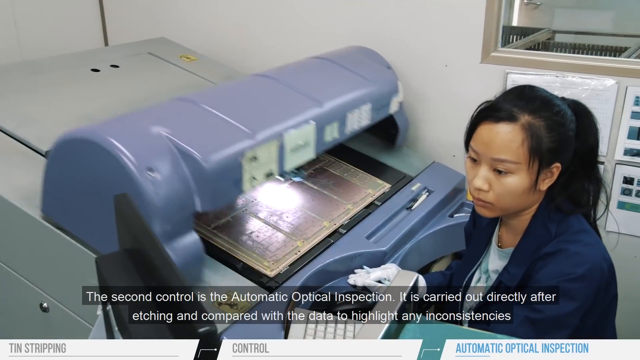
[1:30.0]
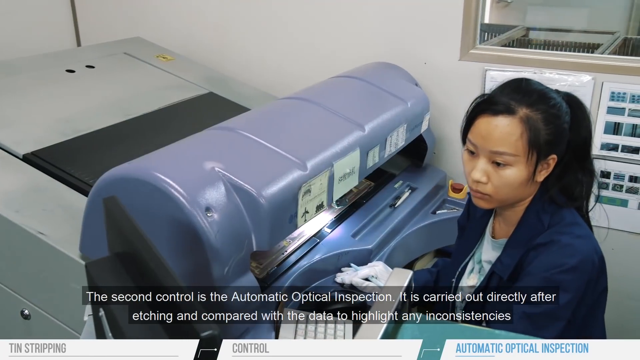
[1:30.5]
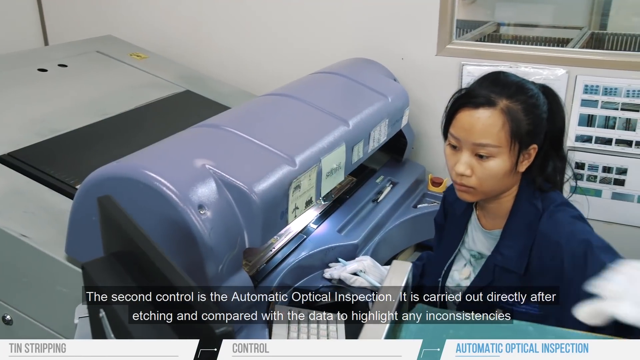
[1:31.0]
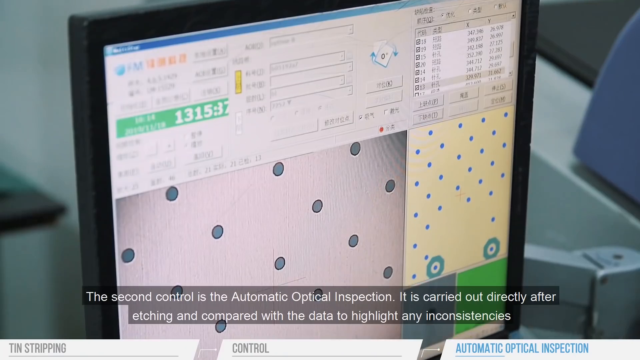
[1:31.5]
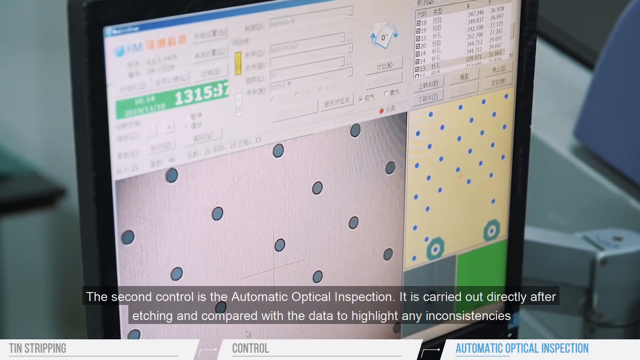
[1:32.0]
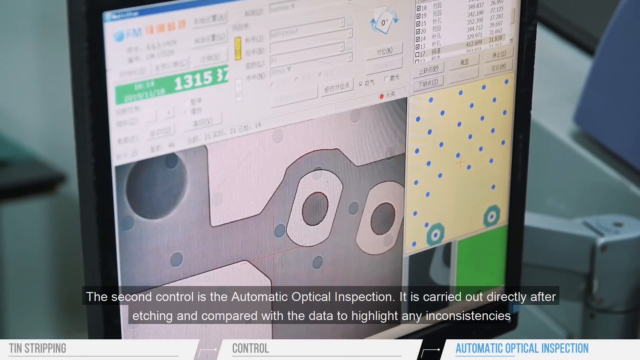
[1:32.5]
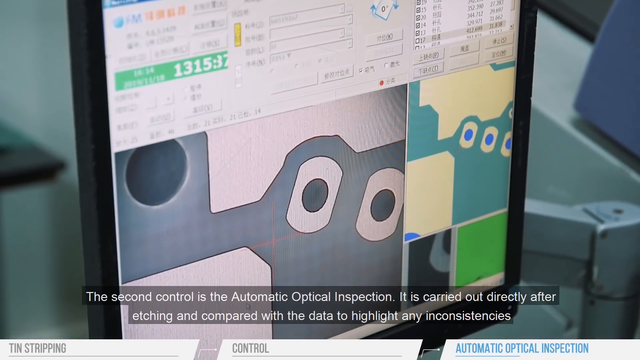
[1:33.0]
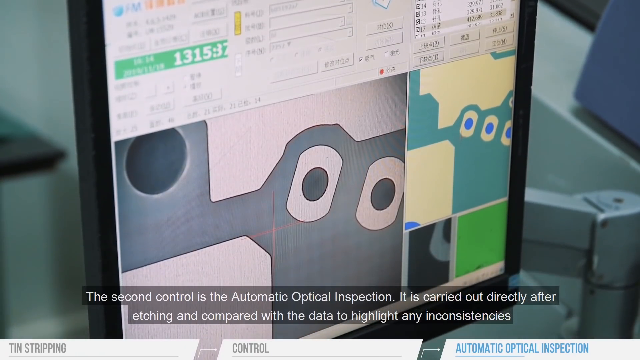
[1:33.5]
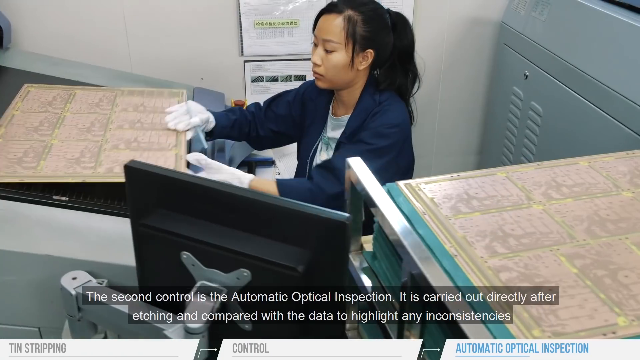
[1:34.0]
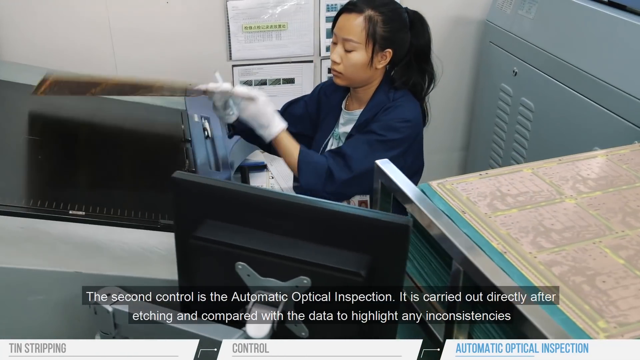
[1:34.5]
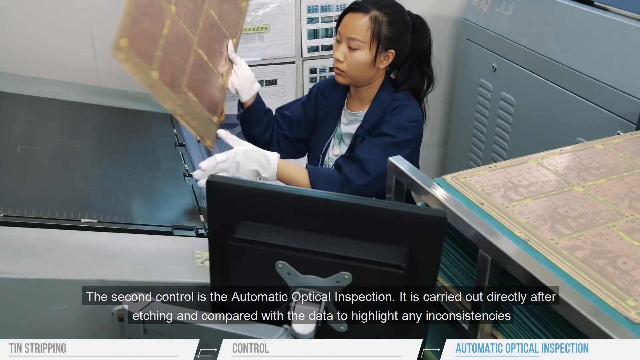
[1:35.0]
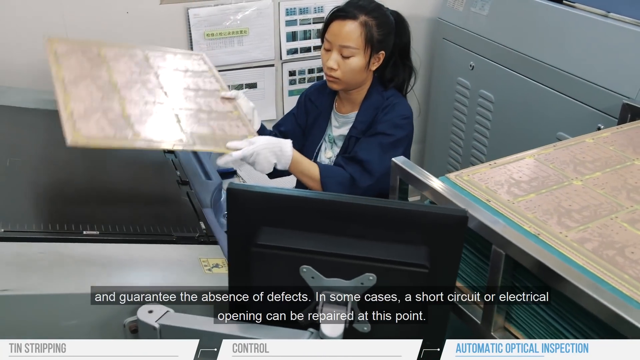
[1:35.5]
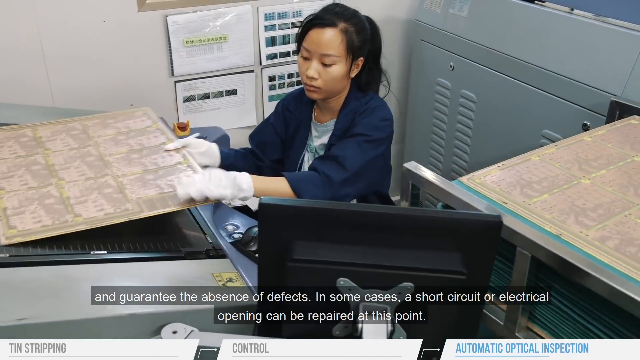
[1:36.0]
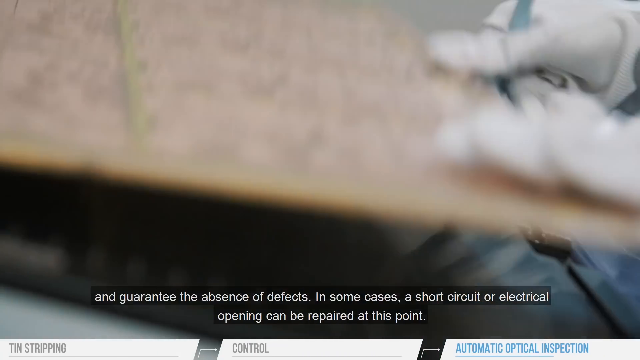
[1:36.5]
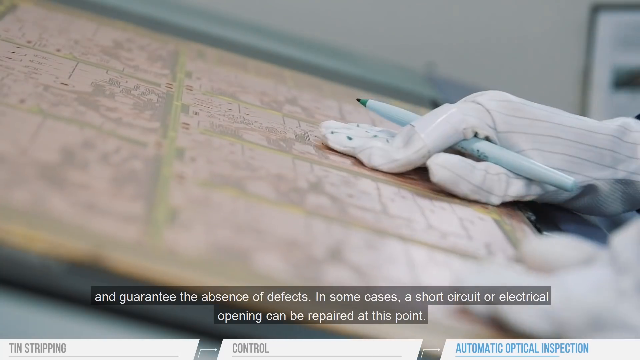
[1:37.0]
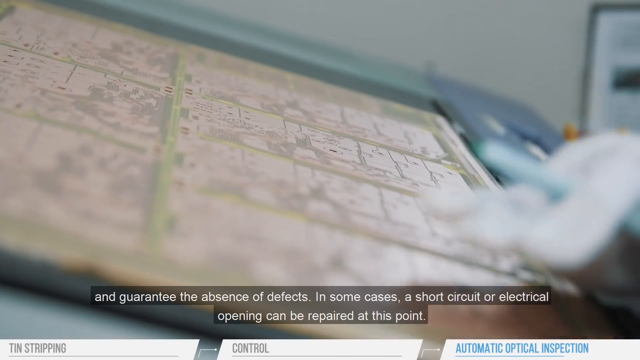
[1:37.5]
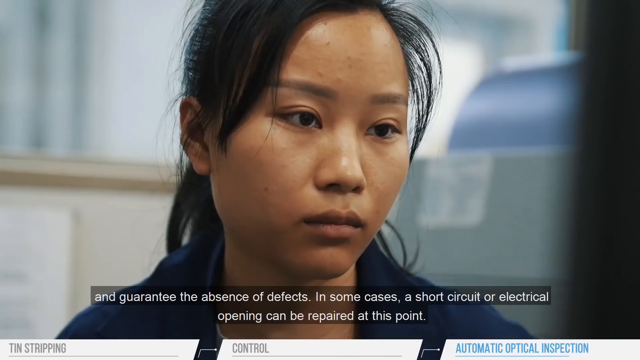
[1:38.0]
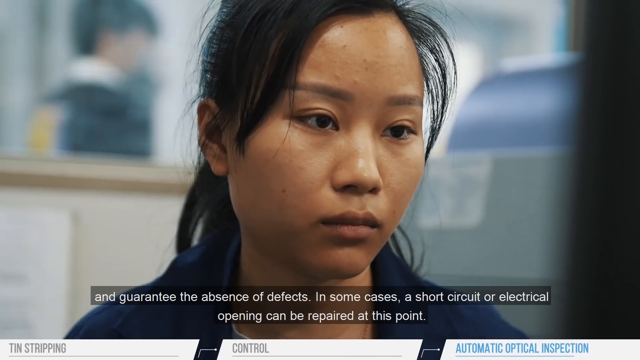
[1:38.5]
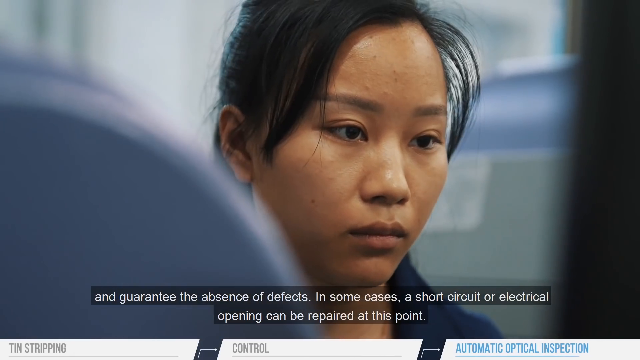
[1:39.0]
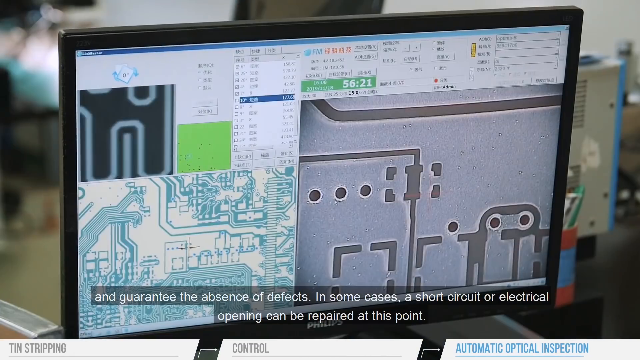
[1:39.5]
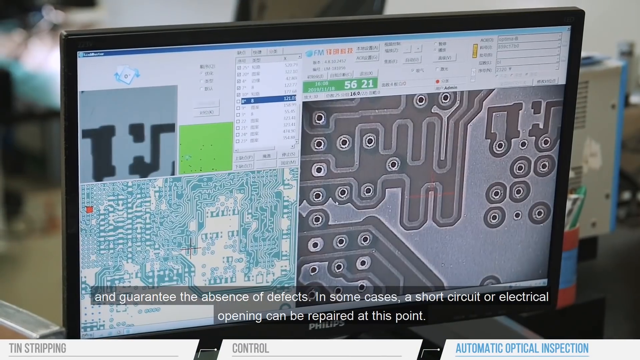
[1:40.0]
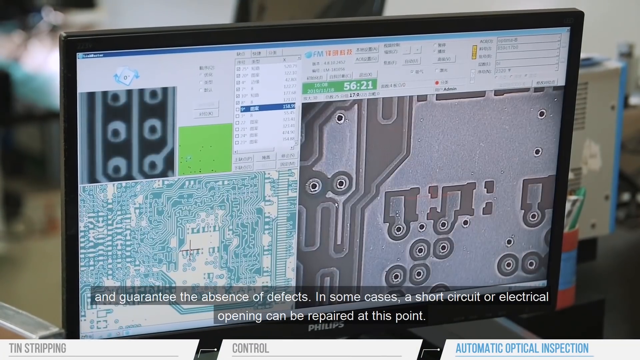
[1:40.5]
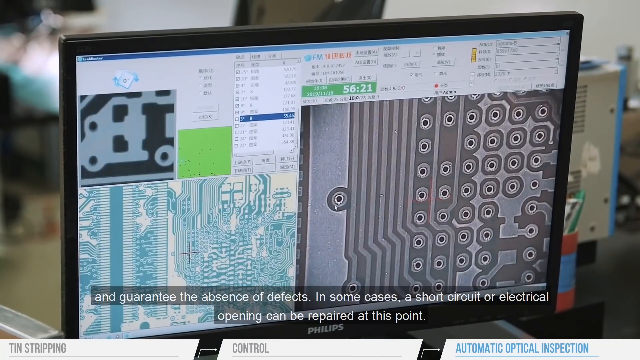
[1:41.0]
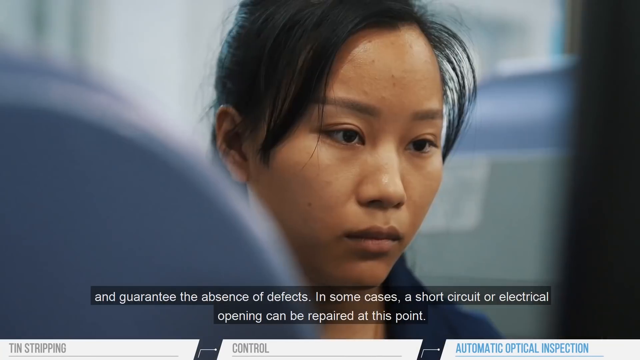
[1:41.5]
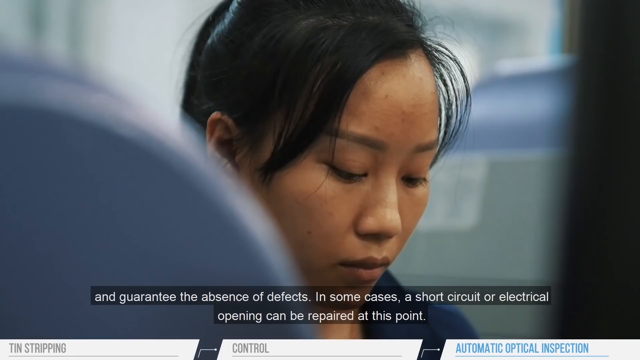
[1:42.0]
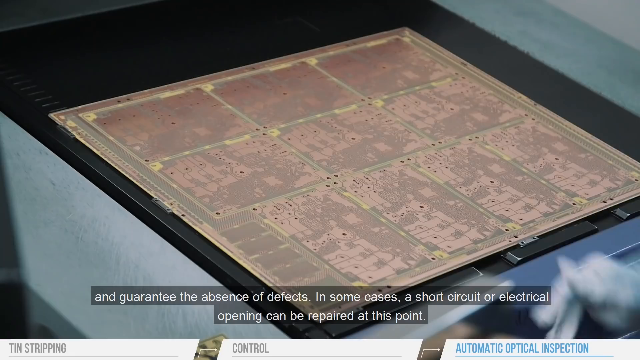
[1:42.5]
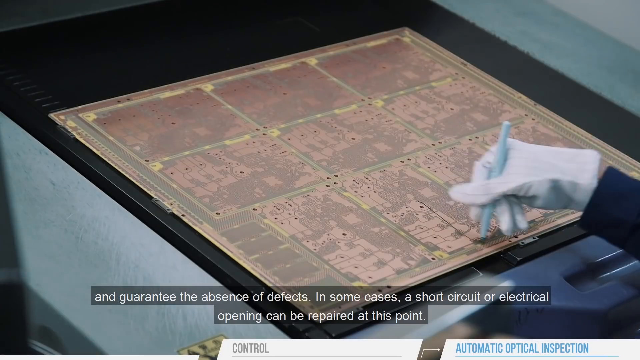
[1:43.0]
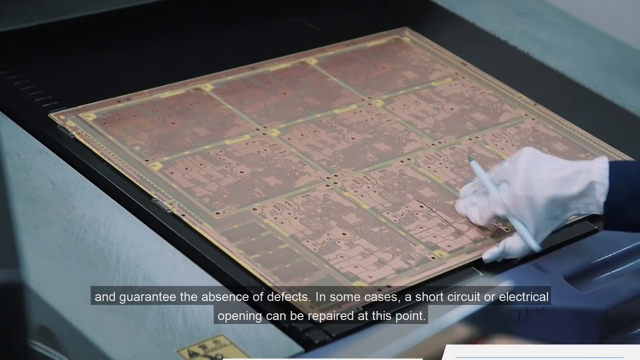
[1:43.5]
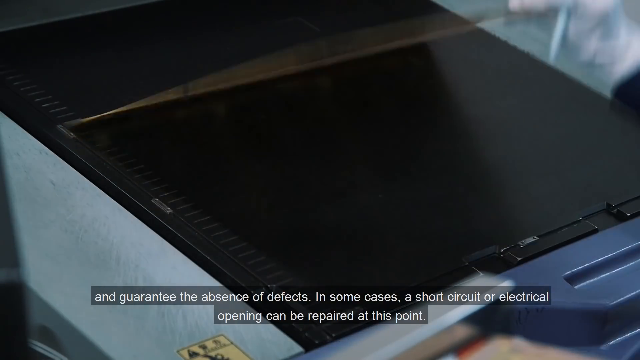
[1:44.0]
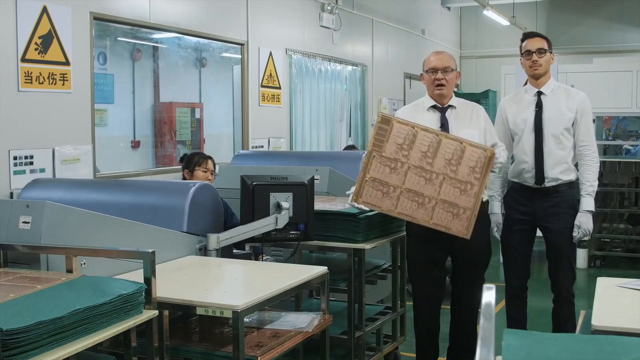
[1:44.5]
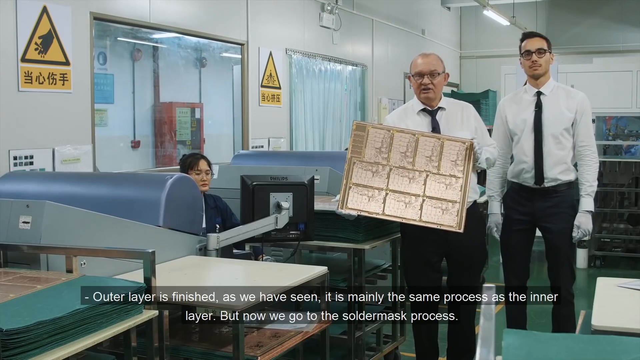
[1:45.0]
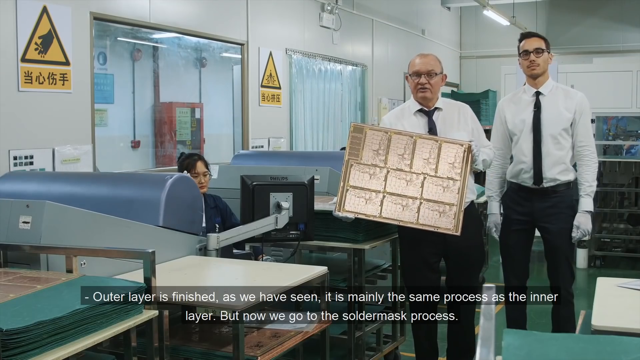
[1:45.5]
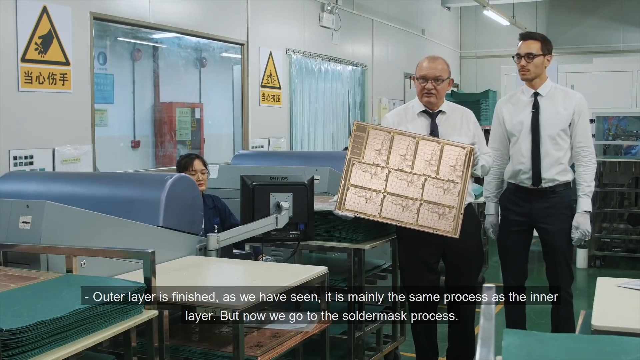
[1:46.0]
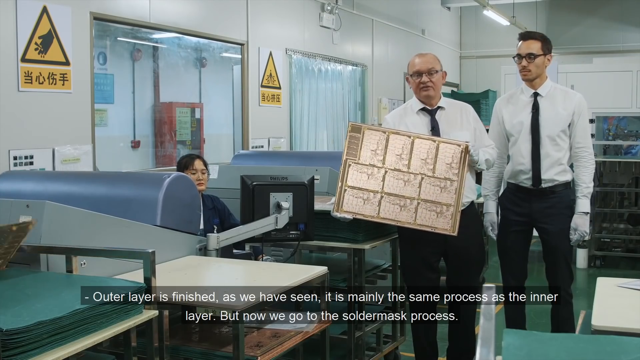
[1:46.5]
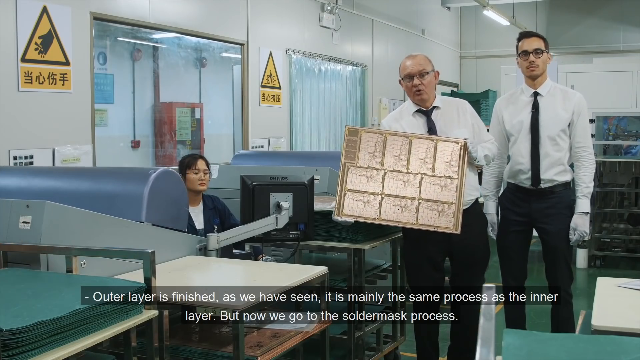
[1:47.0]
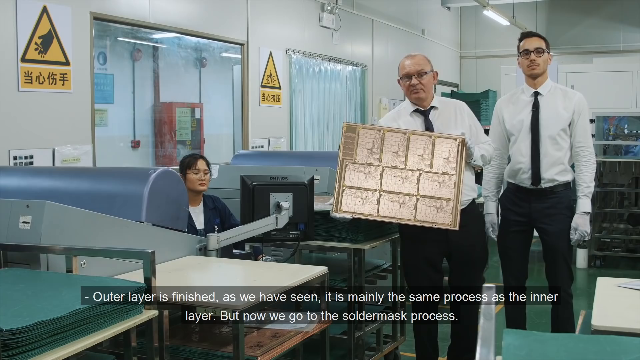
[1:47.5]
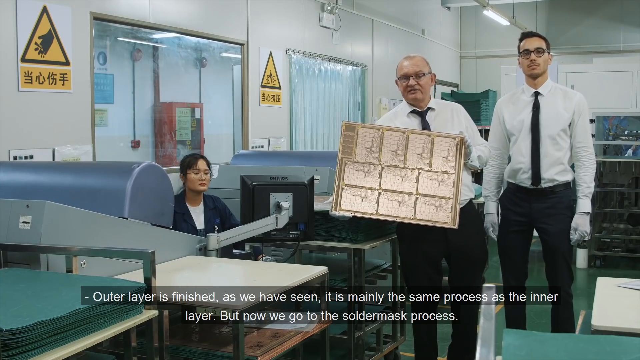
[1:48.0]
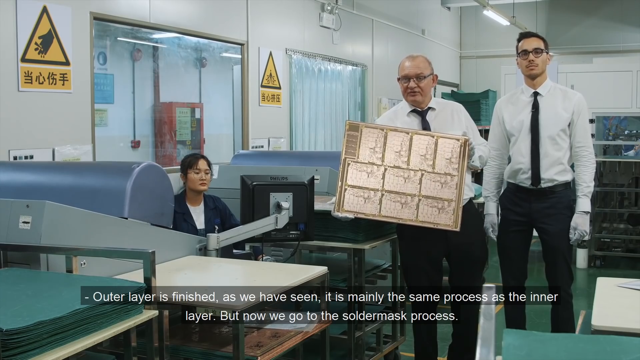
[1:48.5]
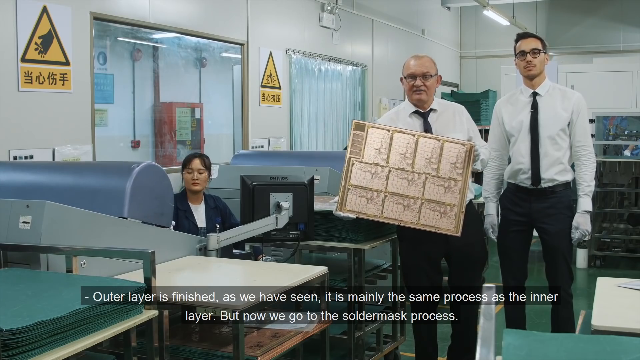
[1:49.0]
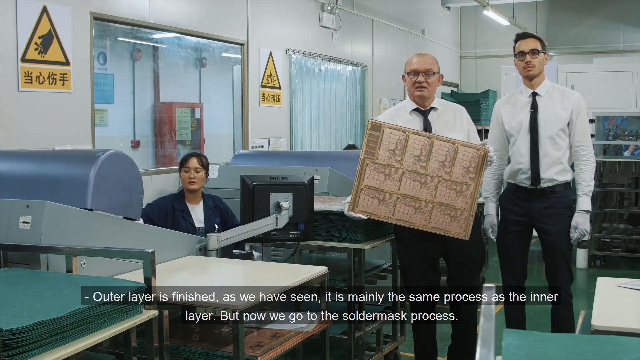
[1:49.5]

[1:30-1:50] The woman places the printed circuit board on a large flat bed with a scanner that runs over it. The image is loaded into a computer, where she zooms in on the scanned image to check for inconsistencies or imperfections. She then flips the board over, scans the other side and does the same checks on the computer, with close-up images shown on its screen. Accompanying text reads "outer layer is finished as we have seen it is mainly the same process as the inner layer but now we go to the solder mask process". One of the two men from earlier now holds the finished board.